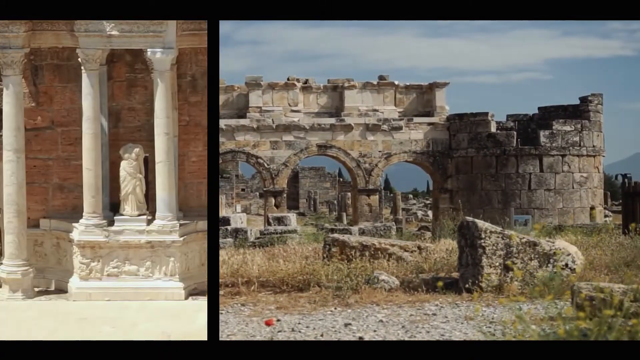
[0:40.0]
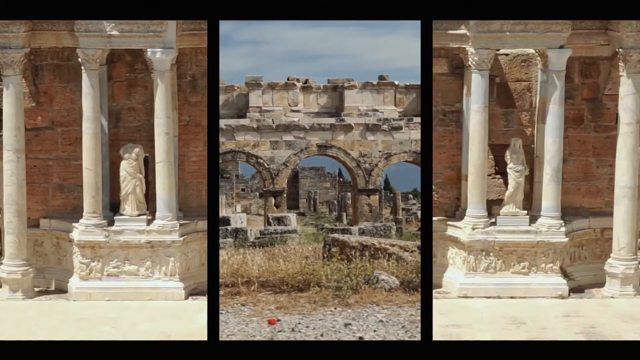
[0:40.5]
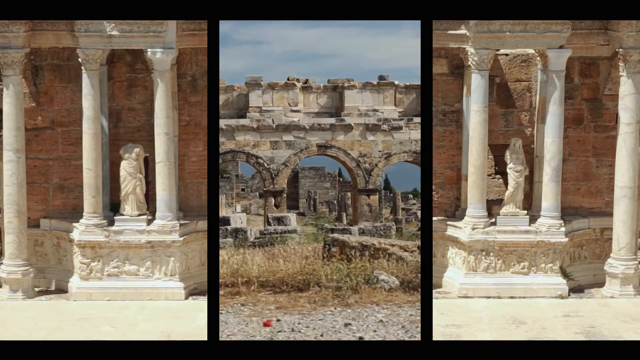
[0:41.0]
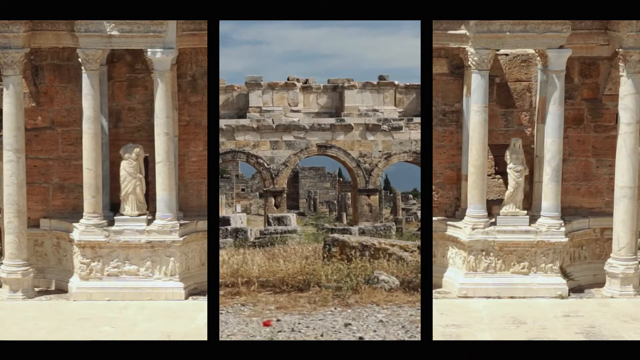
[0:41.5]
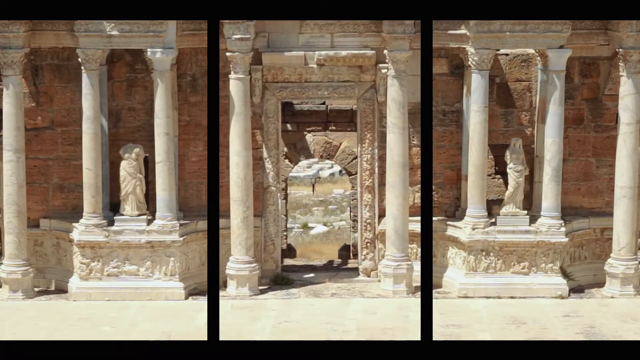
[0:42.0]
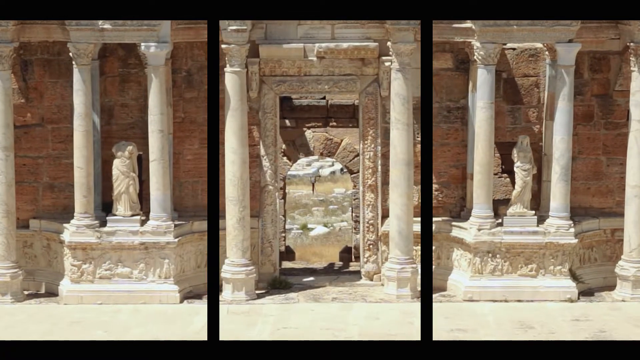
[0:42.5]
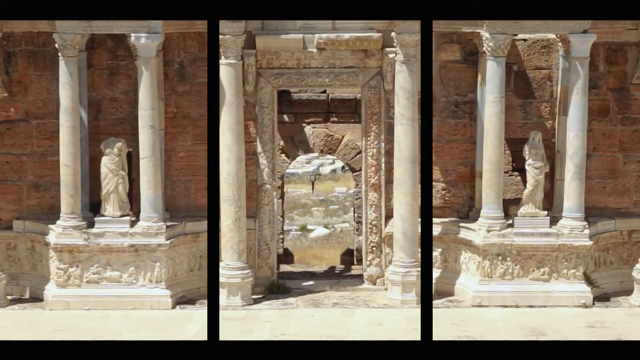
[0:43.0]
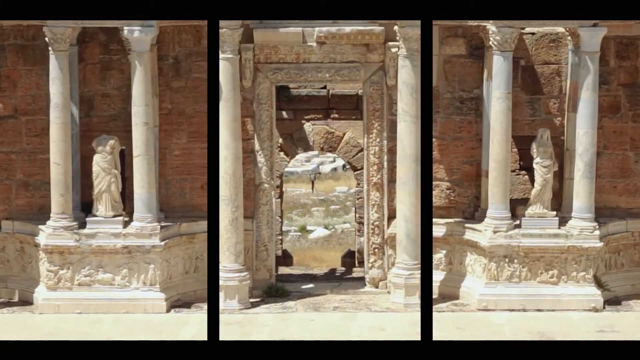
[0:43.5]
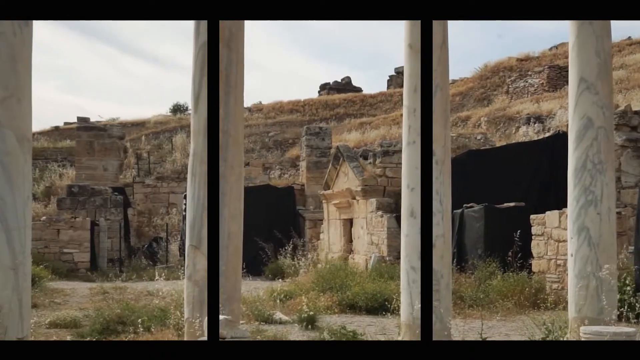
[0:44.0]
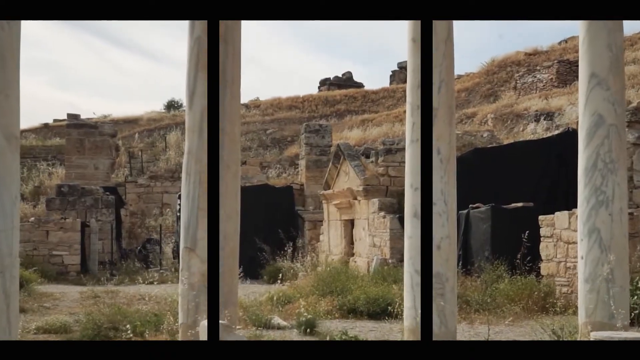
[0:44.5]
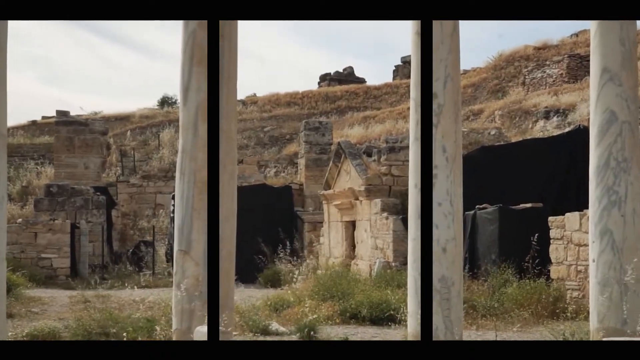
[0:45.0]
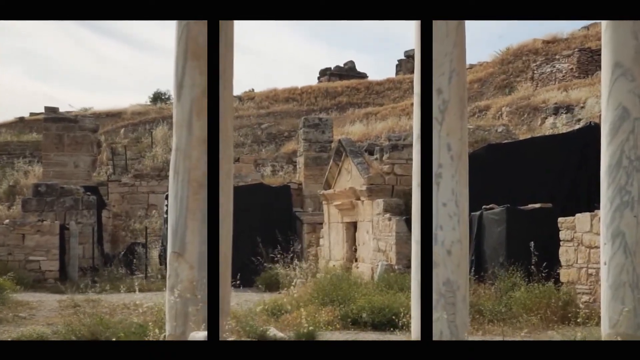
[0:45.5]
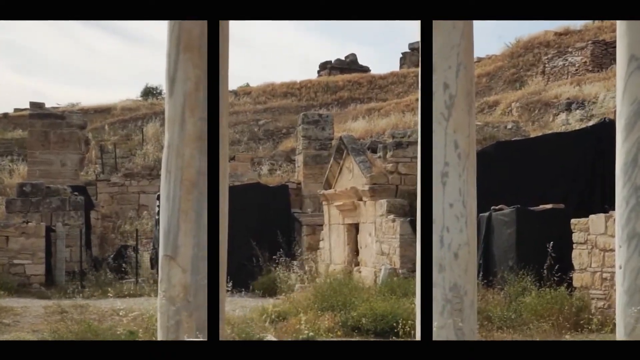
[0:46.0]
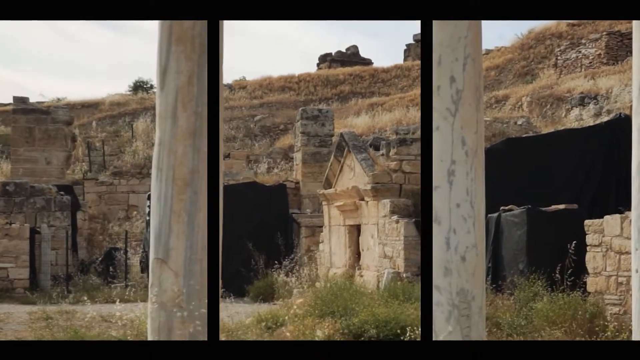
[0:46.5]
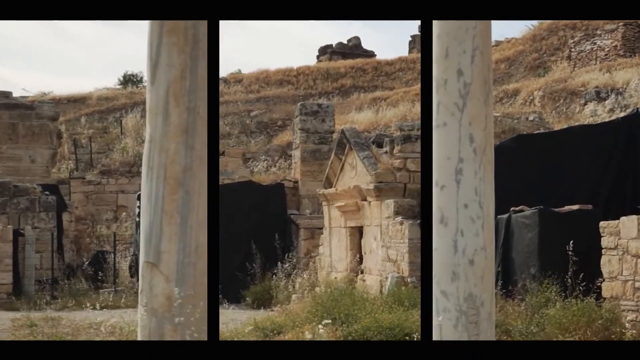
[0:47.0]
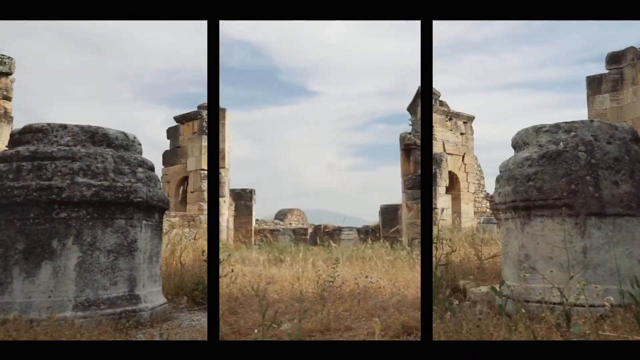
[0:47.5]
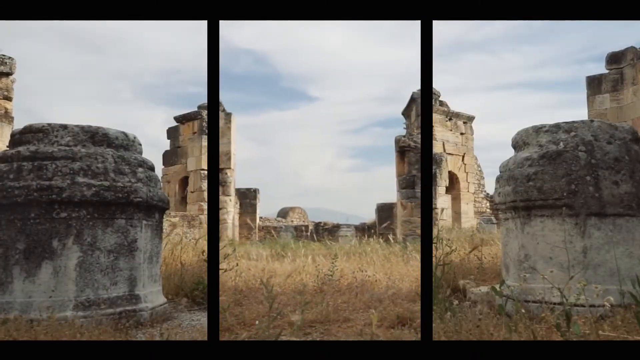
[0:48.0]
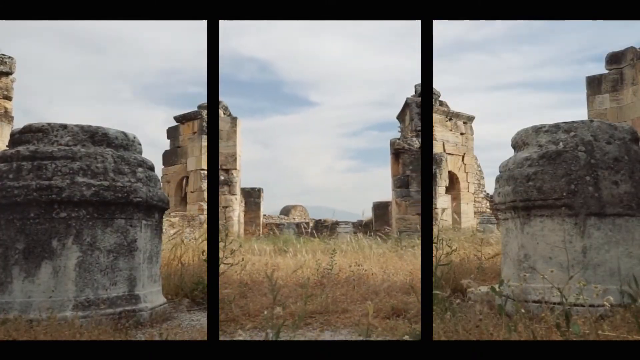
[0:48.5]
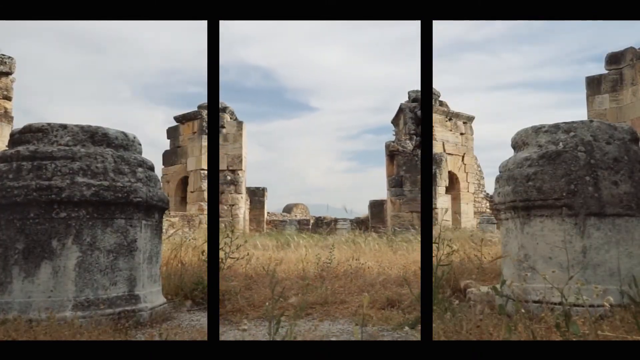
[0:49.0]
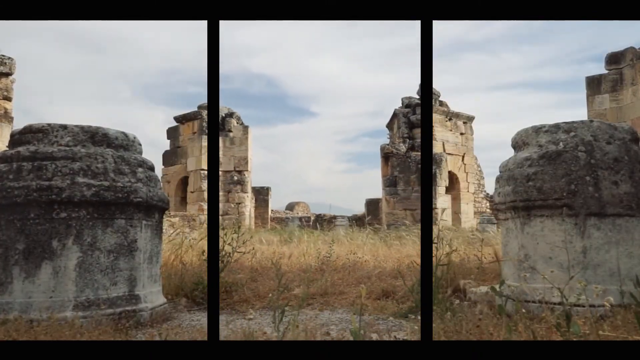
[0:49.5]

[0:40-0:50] The ancient architecture includes walls, pillars, statues, and huge boulders and stones that have been worked into structures. There are two statues: one is headless and one is complete. Many stone structures are also visible.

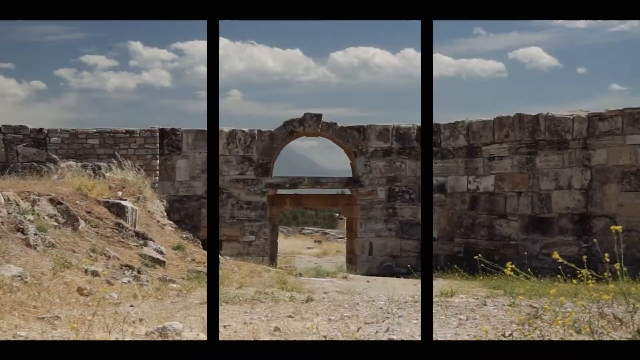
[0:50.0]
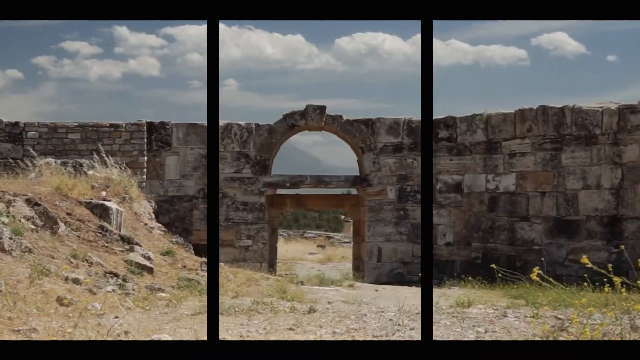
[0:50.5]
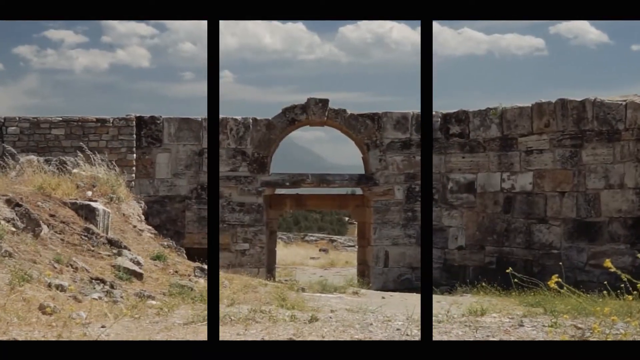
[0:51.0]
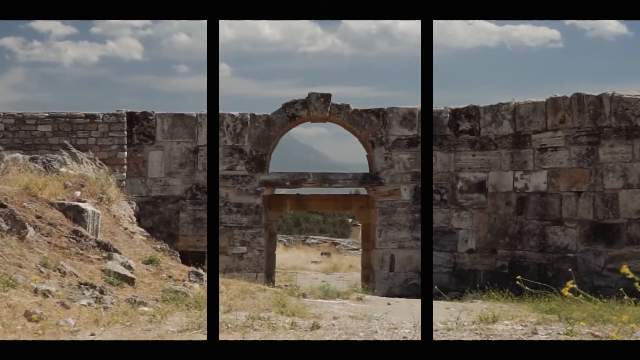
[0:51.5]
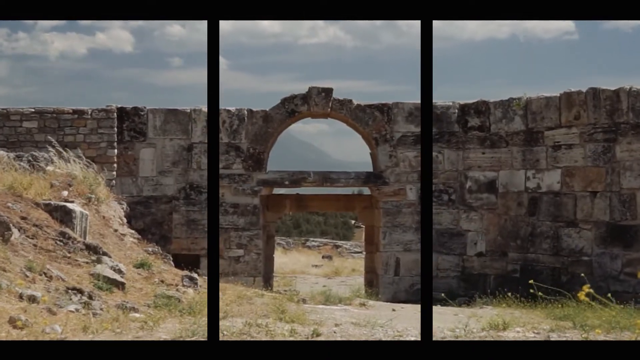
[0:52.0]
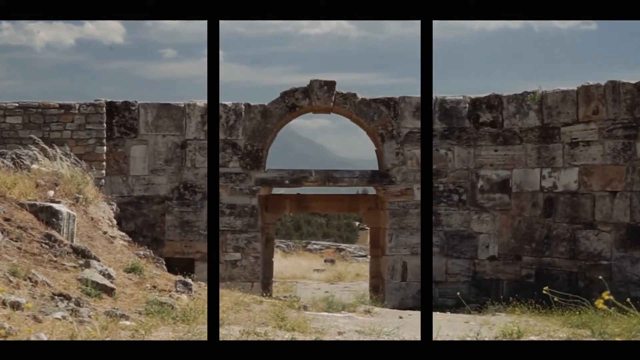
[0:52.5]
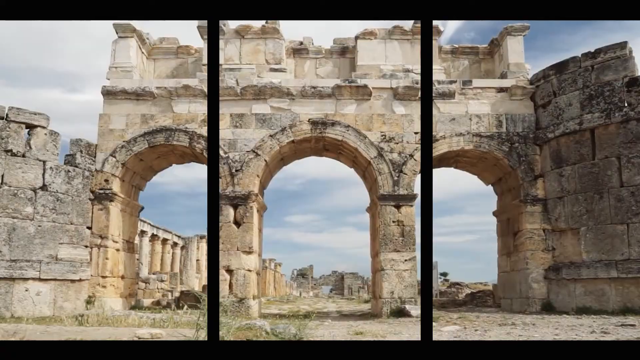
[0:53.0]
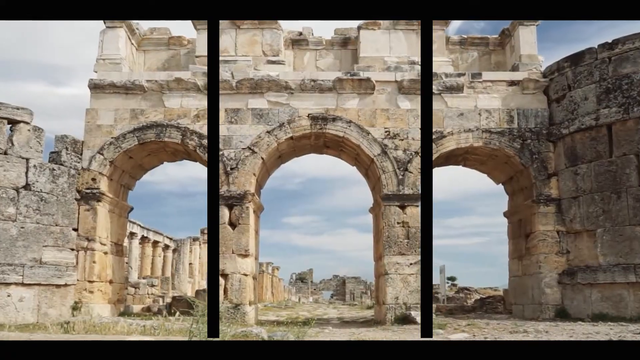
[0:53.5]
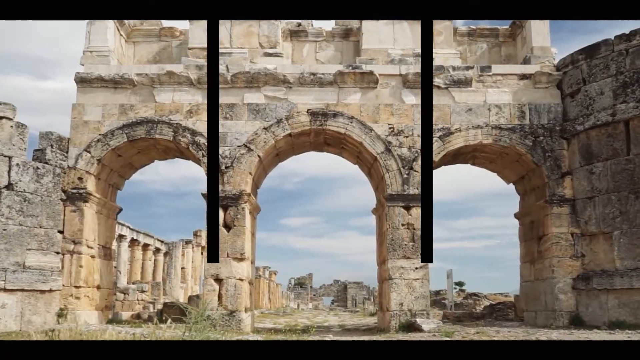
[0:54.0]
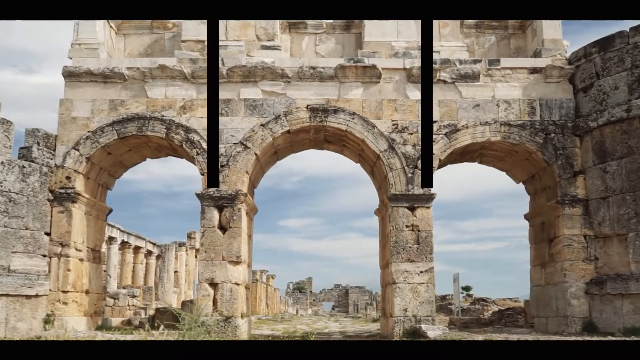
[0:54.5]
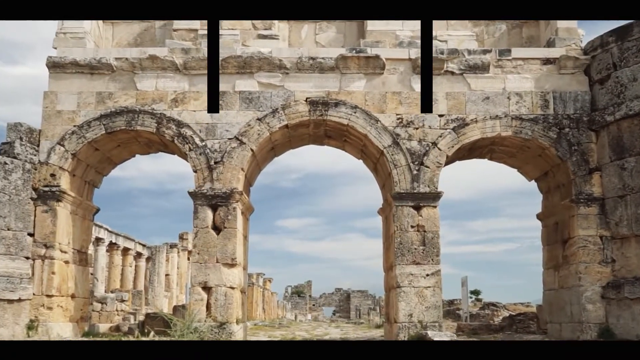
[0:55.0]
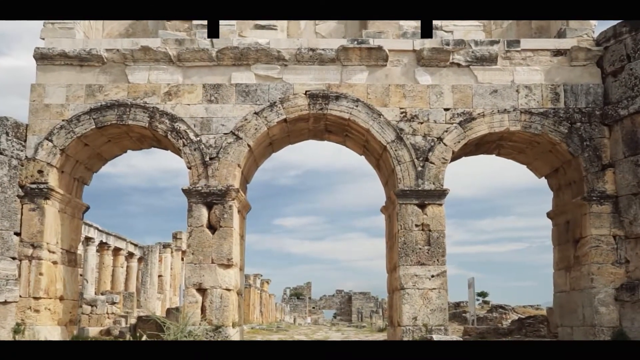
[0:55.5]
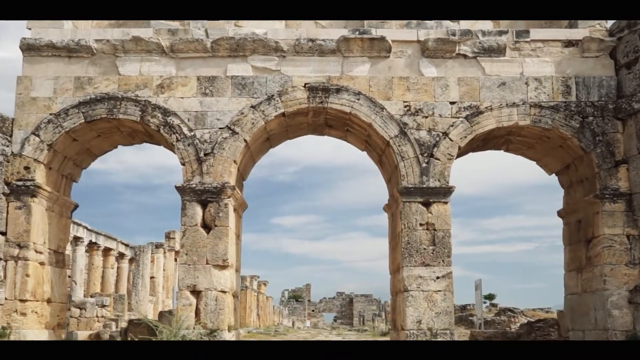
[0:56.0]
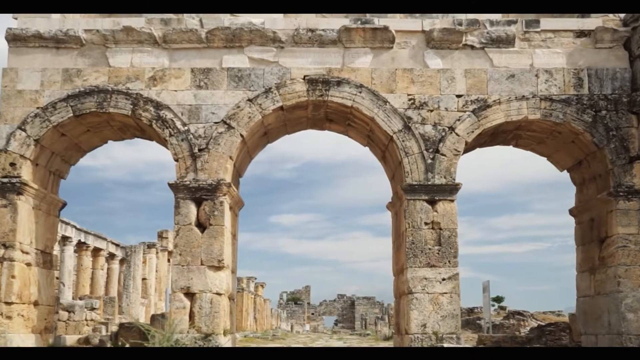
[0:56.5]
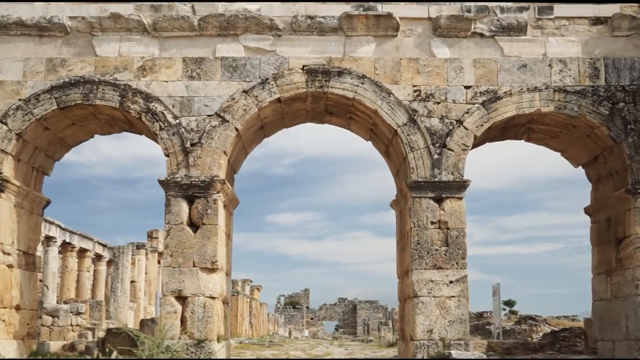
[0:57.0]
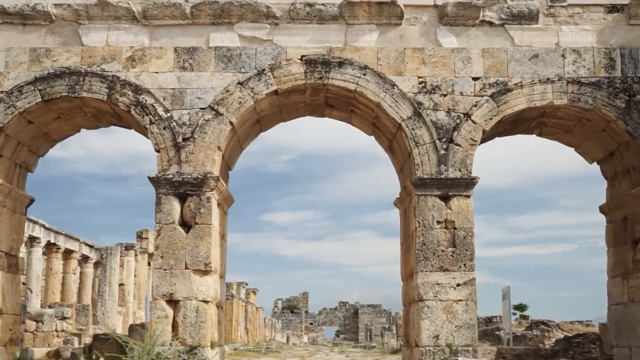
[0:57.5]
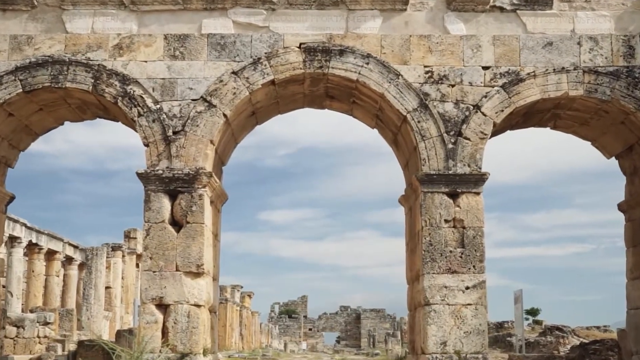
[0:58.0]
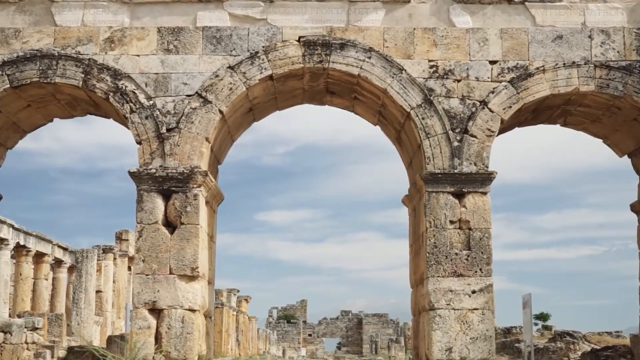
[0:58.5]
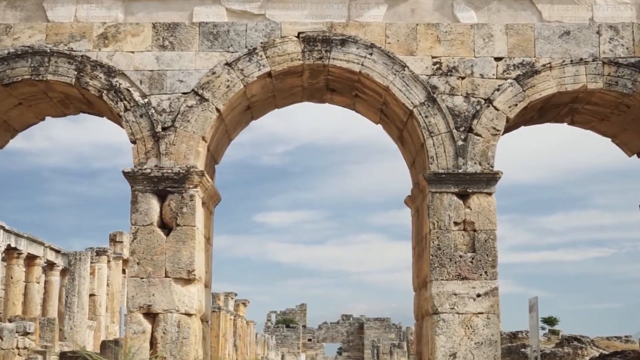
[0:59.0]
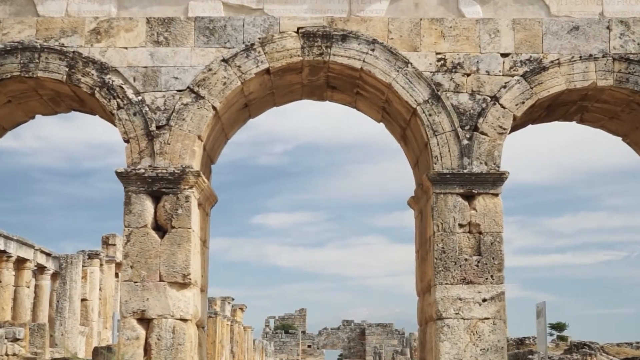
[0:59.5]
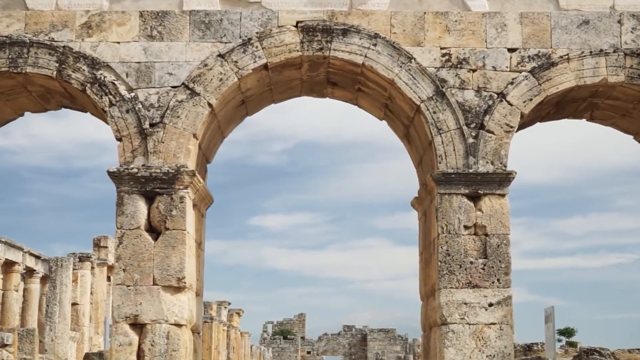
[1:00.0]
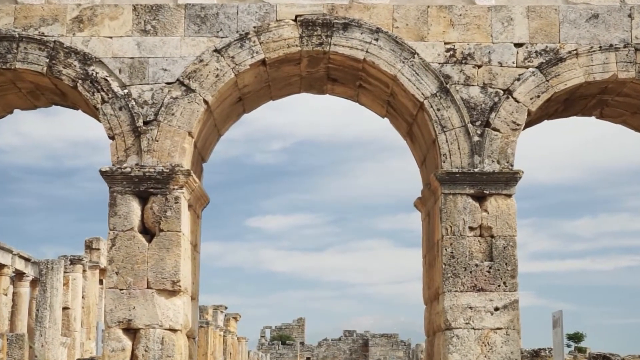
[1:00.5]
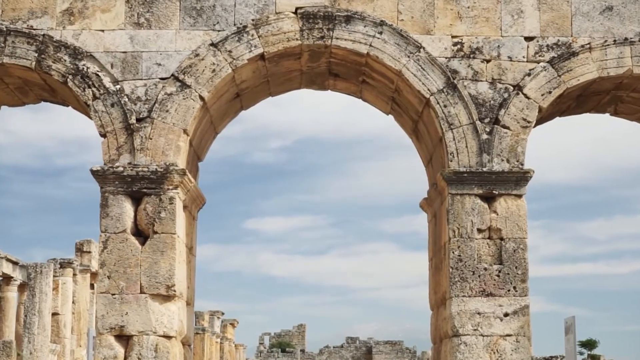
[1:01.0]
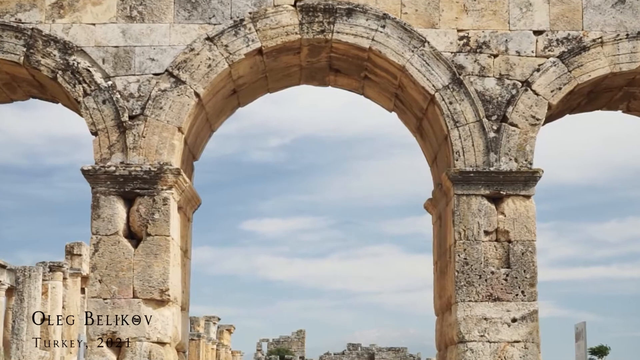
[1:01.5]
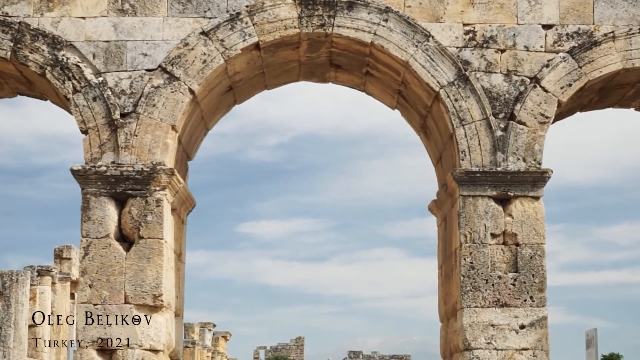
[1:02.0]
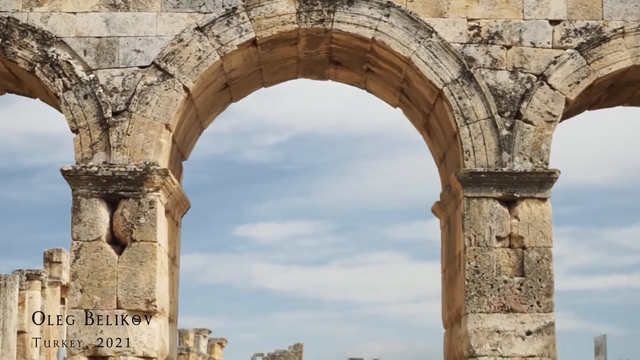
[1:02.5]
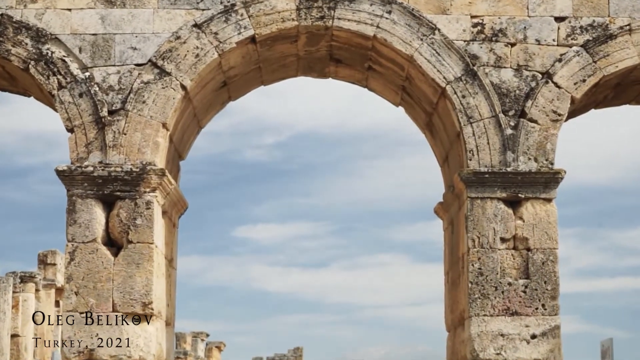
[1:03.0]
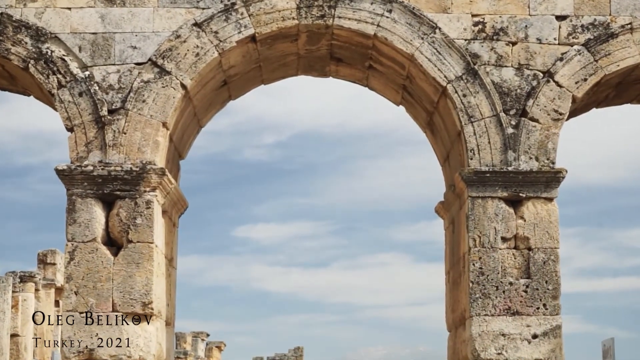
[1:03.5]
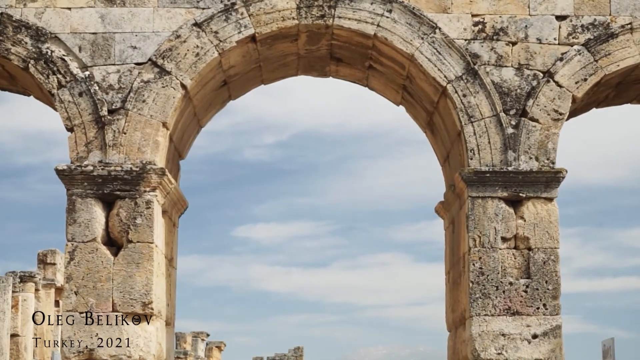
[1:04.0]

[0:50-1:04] The camera moves in on an old wall and then to another entranceway, an arched one, giving a close-up of the stone that makes up the archway. The land is dry and rough, and the sky is light blue with soft clouds. A great deal of architecture is revealed in the ruins.